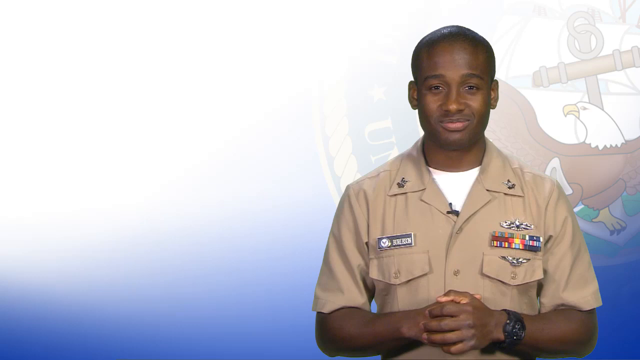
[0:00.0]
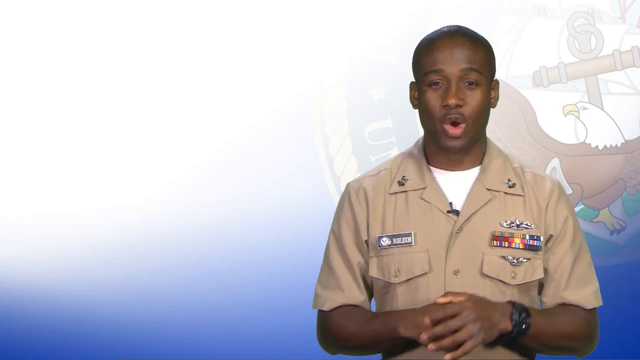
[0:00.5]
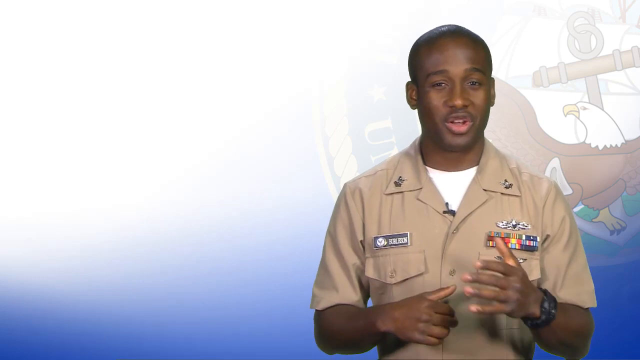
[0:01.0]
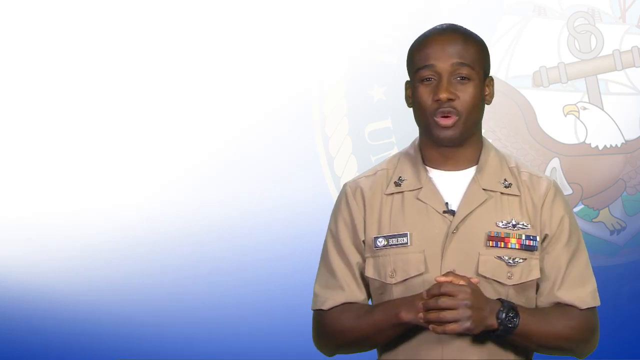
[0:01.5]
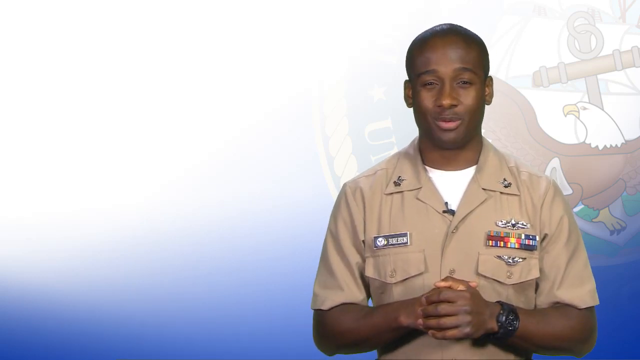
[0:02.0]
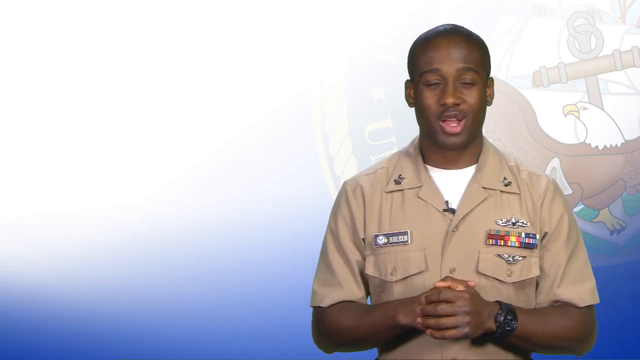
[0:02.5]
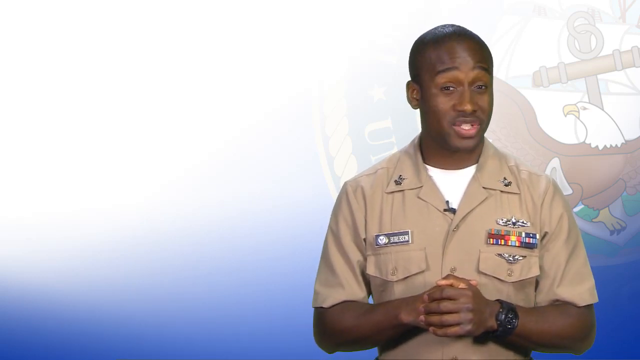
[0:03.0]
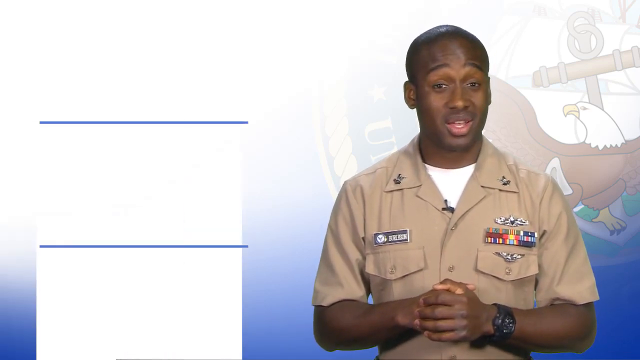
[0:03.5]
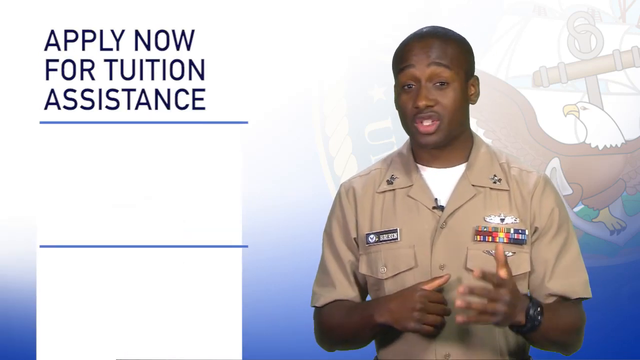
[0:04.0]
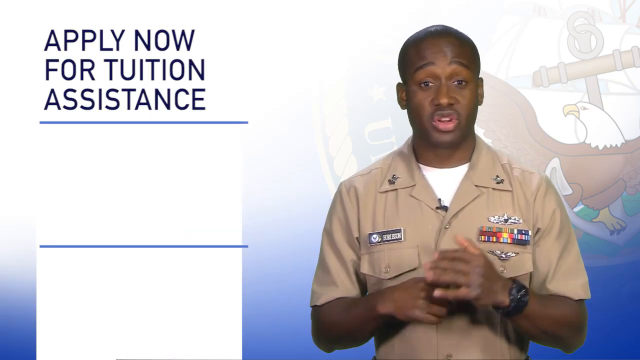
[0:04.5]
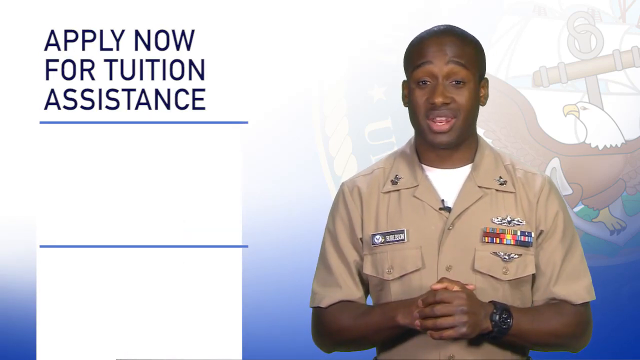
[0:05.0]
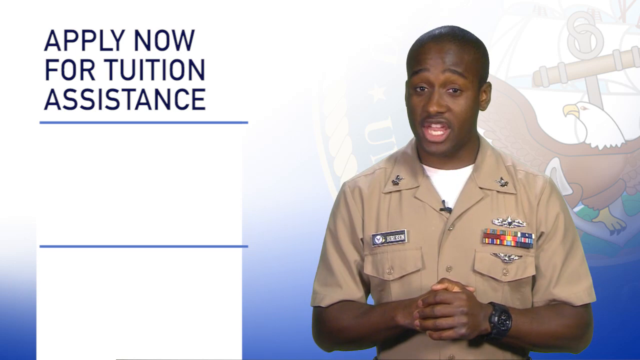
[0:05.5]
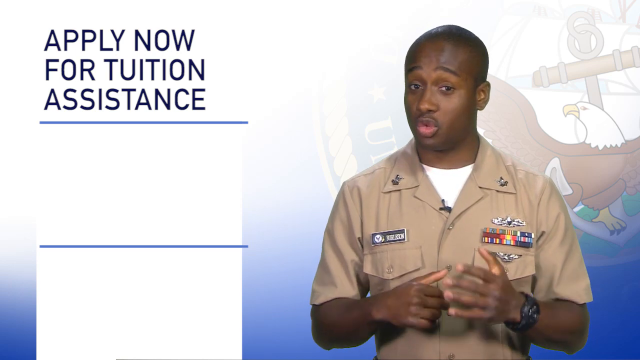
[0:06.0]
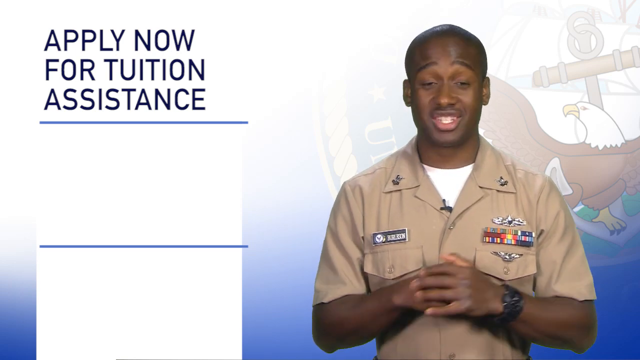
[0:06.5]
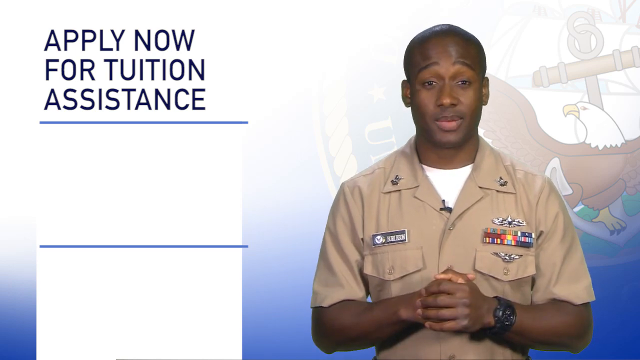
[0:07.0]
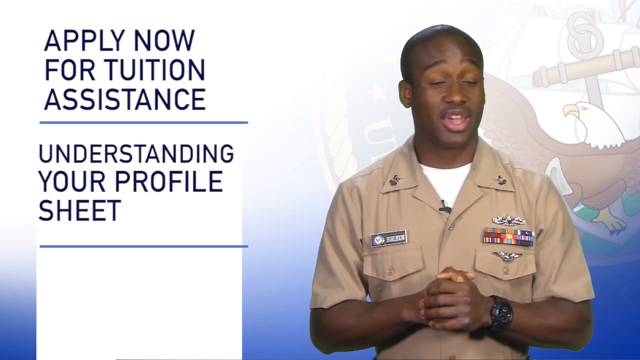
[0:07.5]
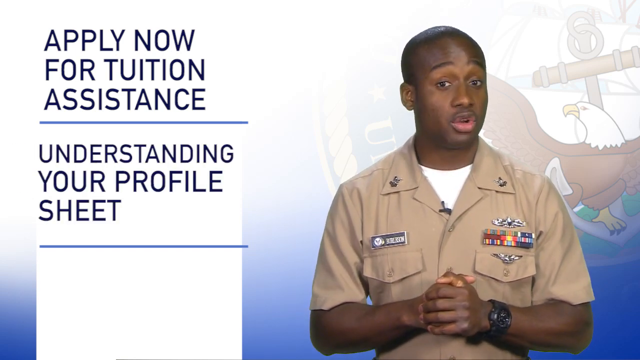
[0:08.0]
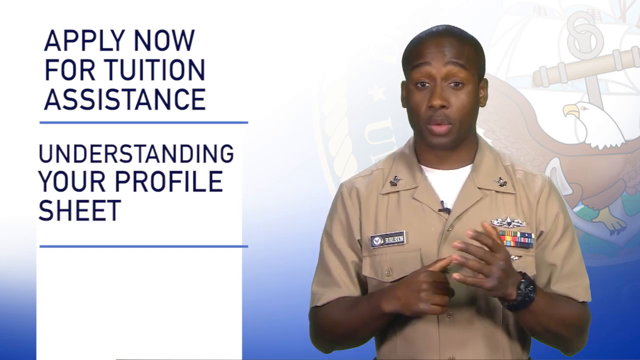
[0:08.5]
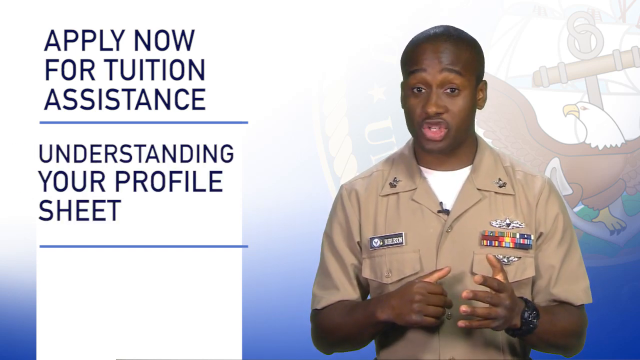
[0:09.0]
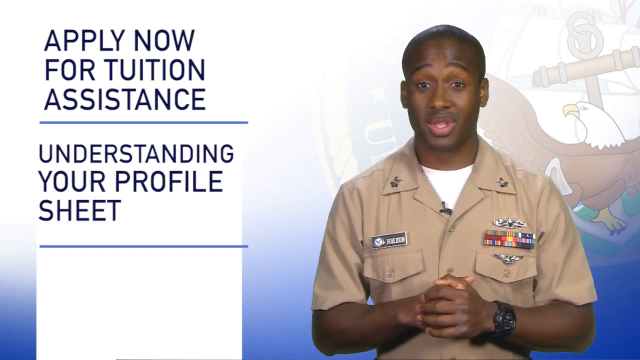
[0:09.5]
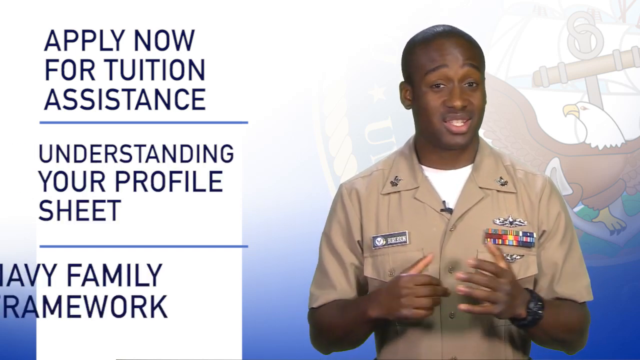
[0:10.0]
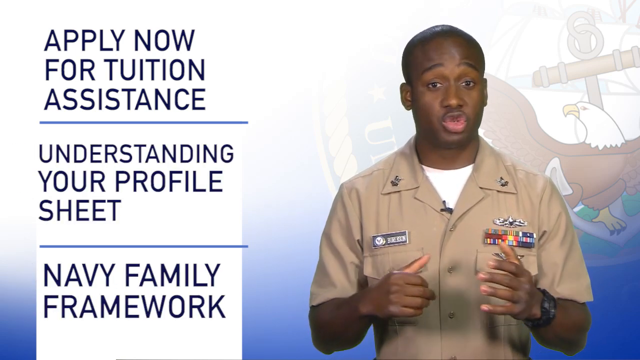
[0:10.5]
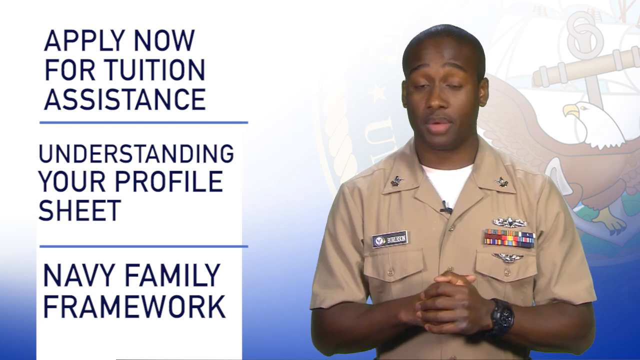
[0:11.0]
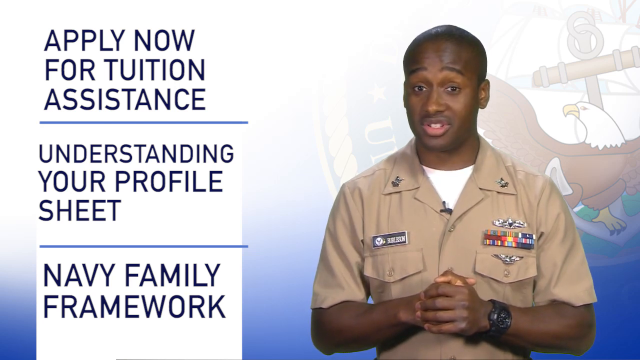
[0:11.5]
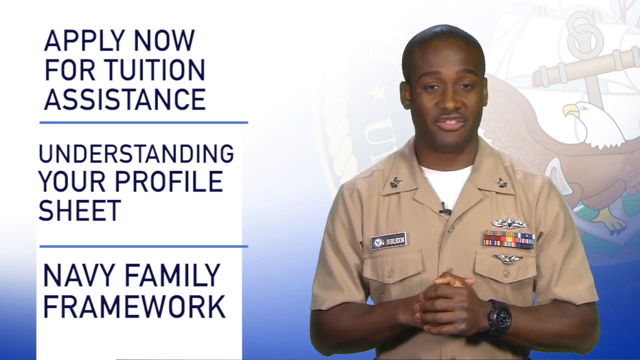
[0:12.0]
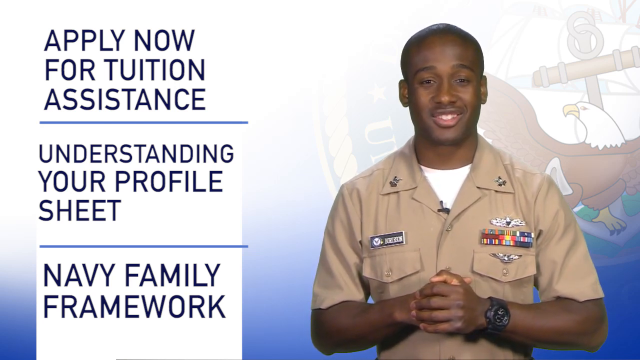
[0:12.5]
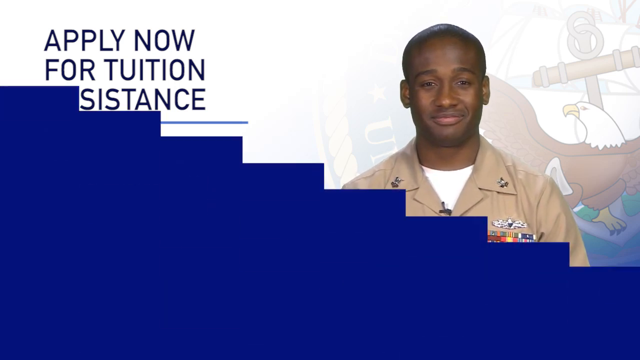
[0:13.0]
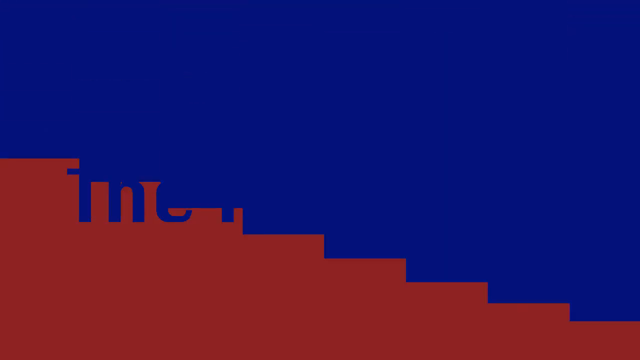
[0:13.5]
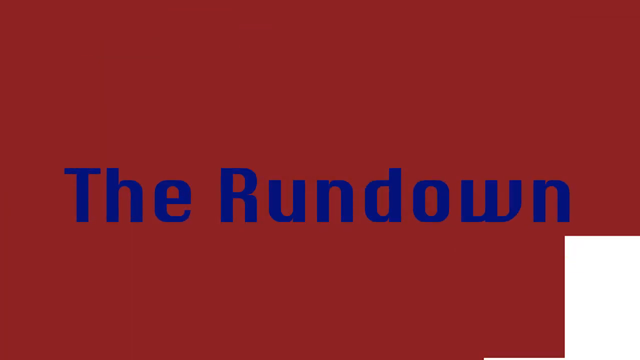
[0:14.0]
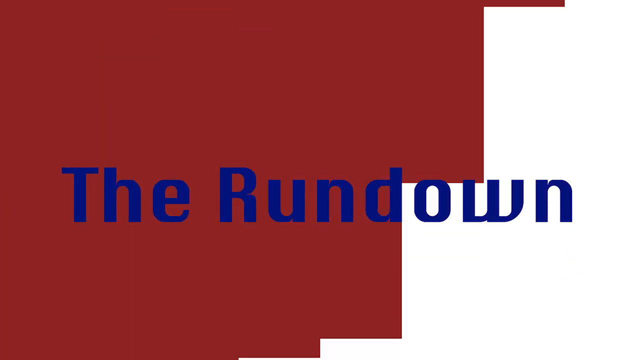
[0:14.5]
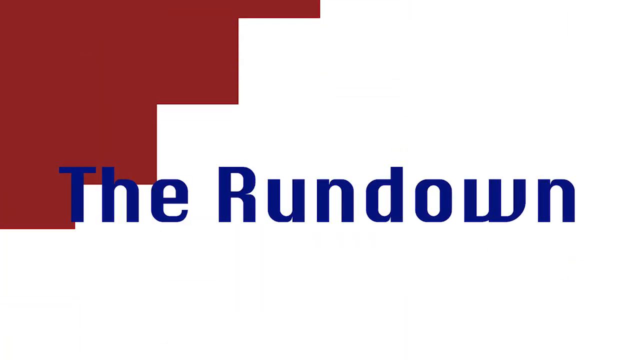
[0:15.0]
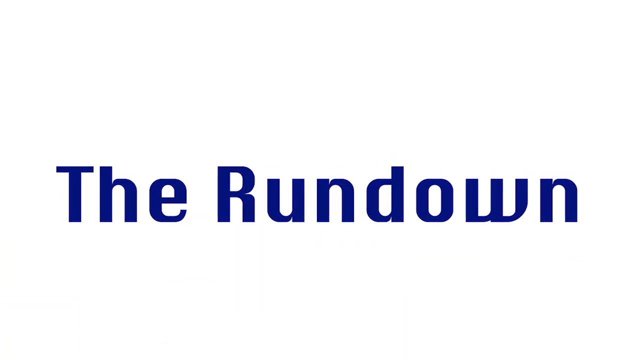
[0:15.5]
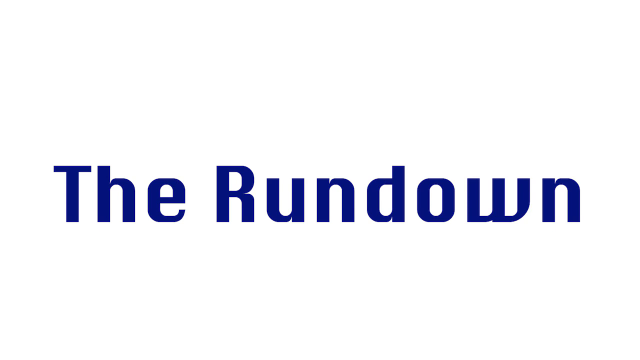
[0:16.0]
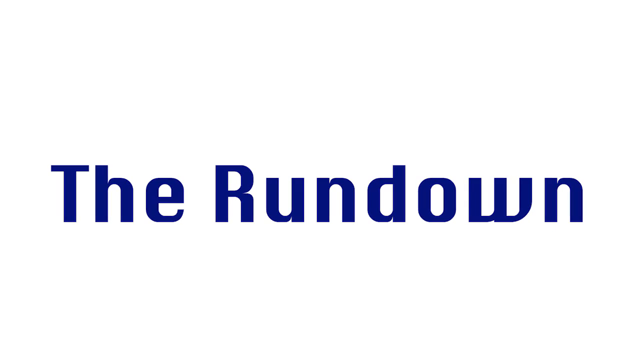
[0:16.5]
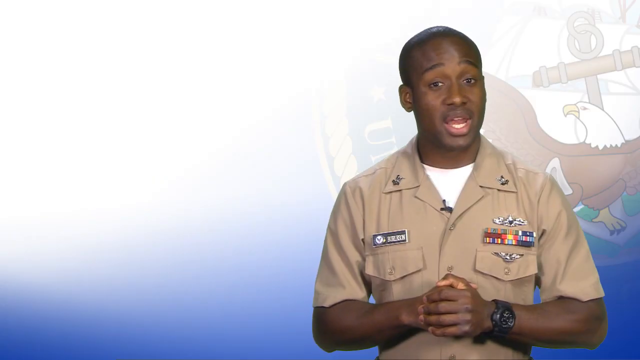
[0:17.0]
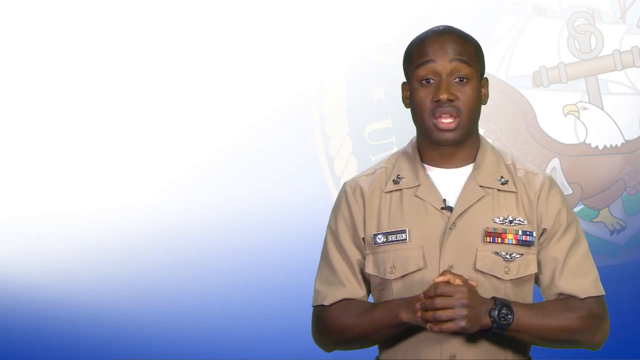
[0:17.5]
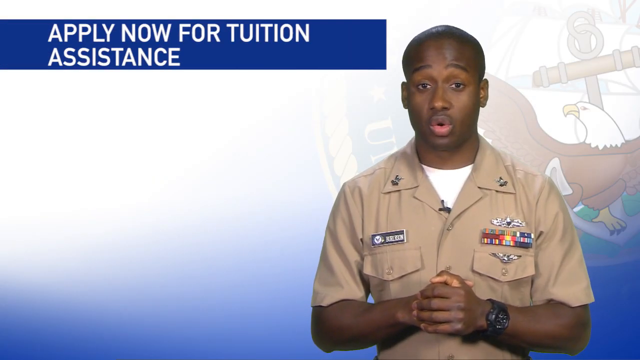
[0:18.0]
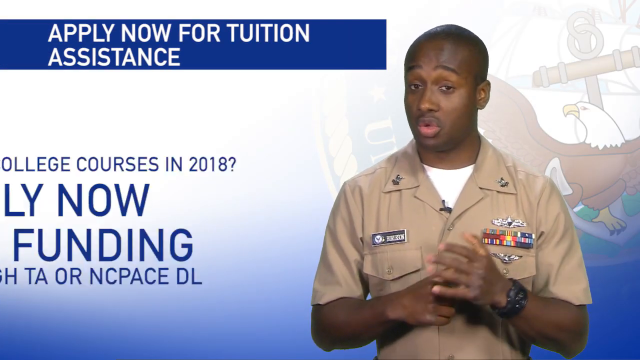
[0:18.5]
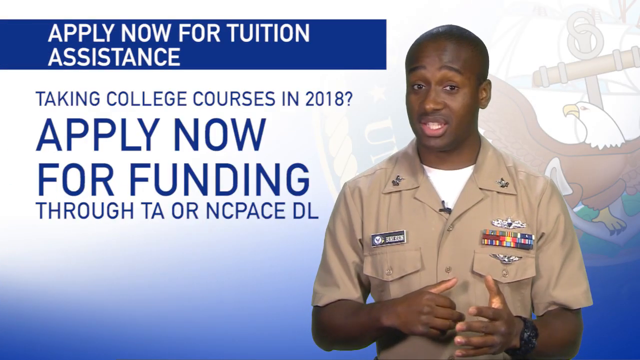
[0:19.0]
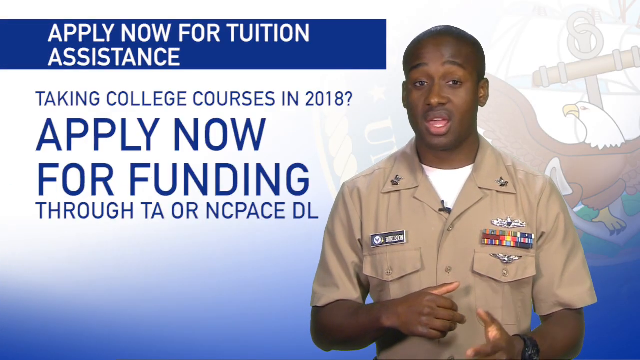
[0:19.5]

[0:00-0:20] A person stands on the right side of the frame wearing some sort of military clothing: a brown short-sleeved t-shirt with chest pockets on both sides and various badges pasted onto it, some of them medals. Behind him is a transparent logo featuring a brown eagle. He talks toward the camera and appears to be wearing a white t-shirt underneath the military shirt. A black watch is on his left wrist. As he talks, text appears on the left side reading "Apply now for tuition assistance," "Understanding your profile sheet" and "Navy Family Framework." The text then says "the rundown," and the video returns to the man talking. The text on the left changes to "Apply now for tuition assistance," "Taking college course in 2018" and "Apply now for funding through TA or NCPACEDL."